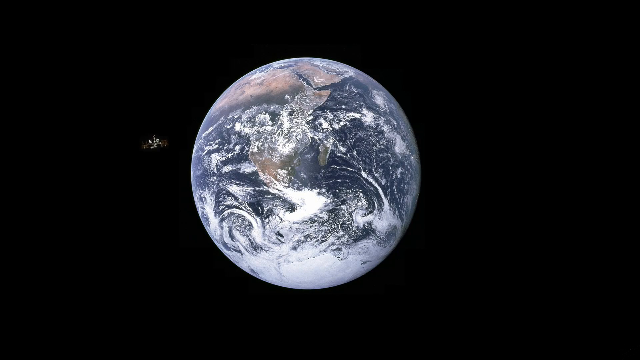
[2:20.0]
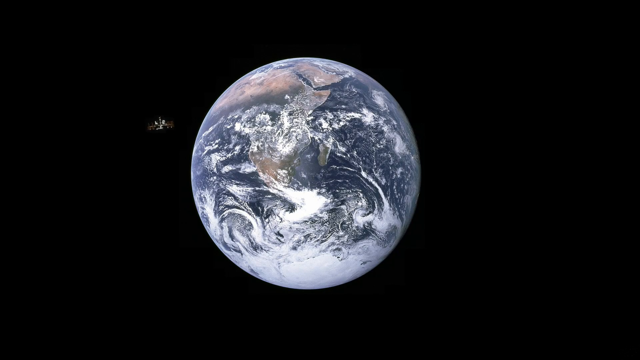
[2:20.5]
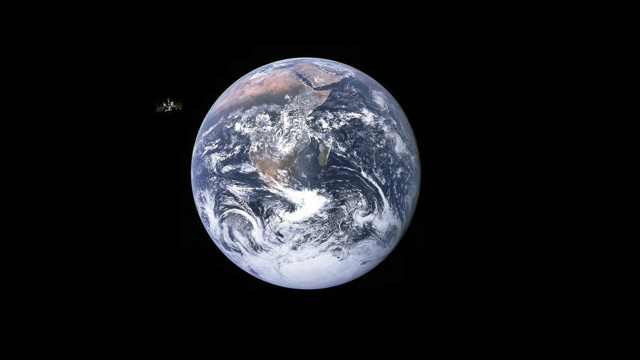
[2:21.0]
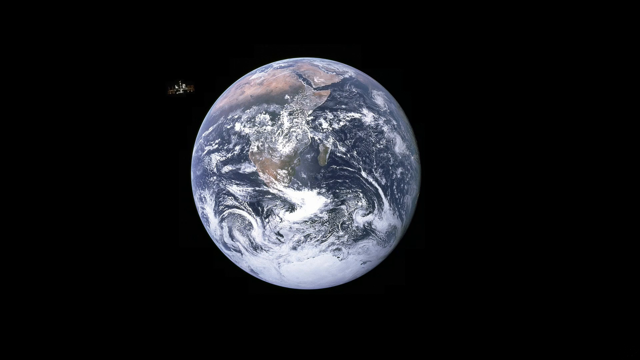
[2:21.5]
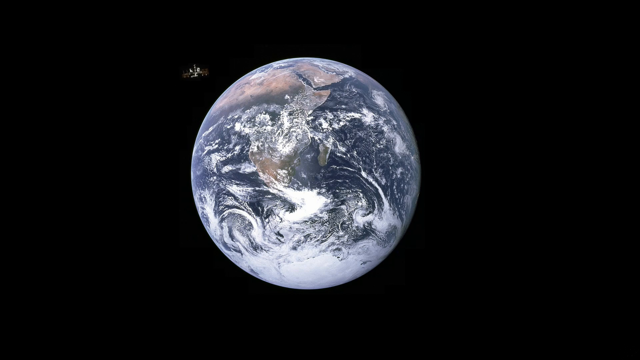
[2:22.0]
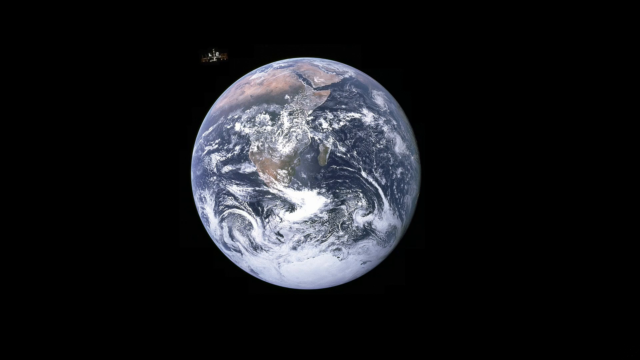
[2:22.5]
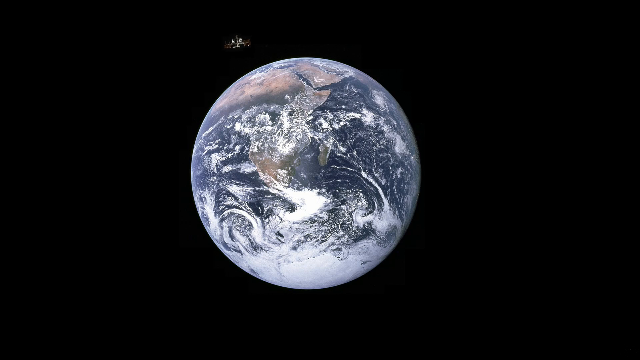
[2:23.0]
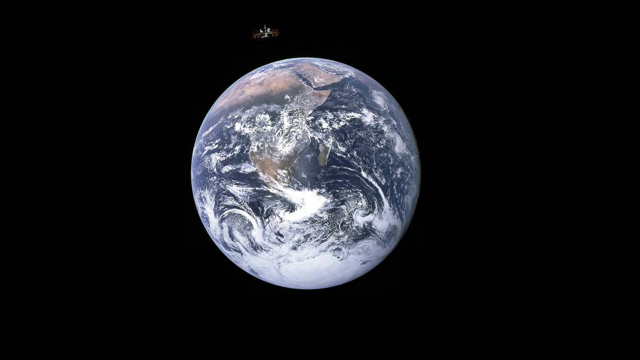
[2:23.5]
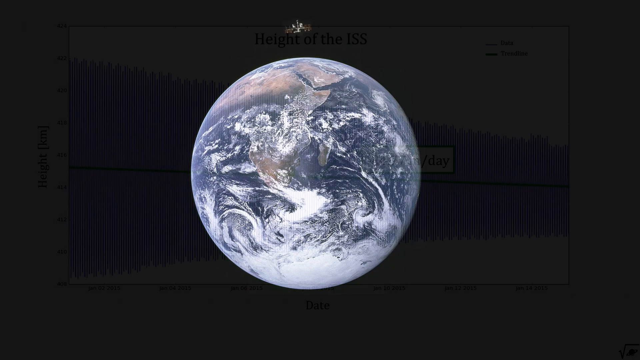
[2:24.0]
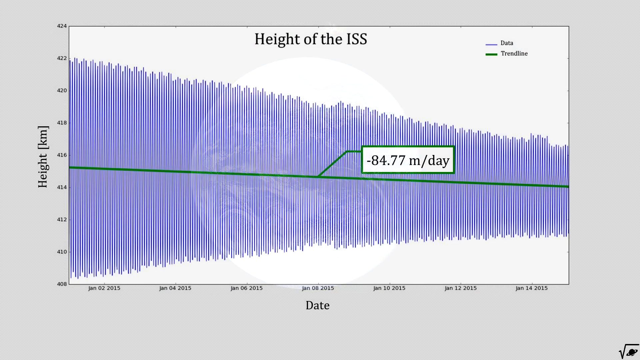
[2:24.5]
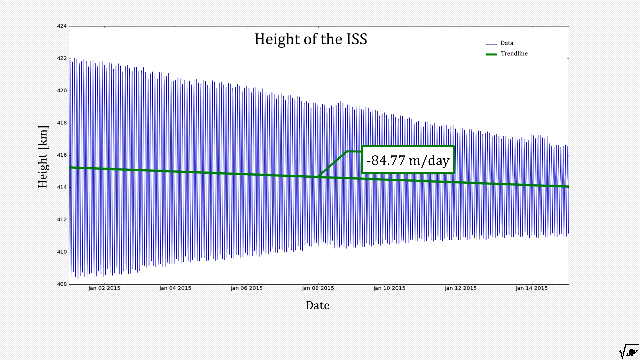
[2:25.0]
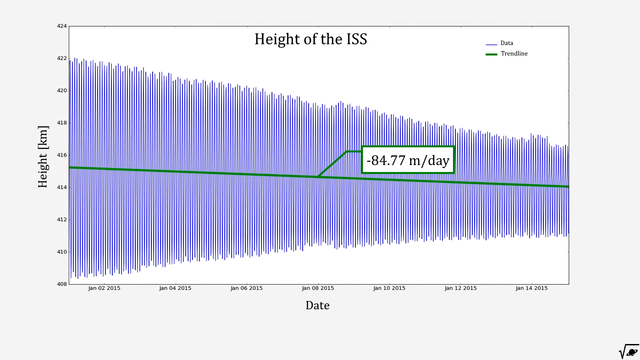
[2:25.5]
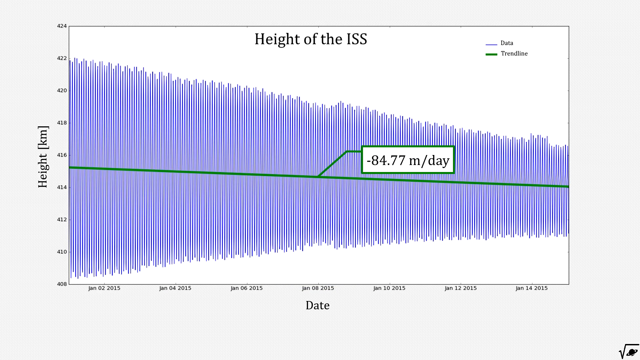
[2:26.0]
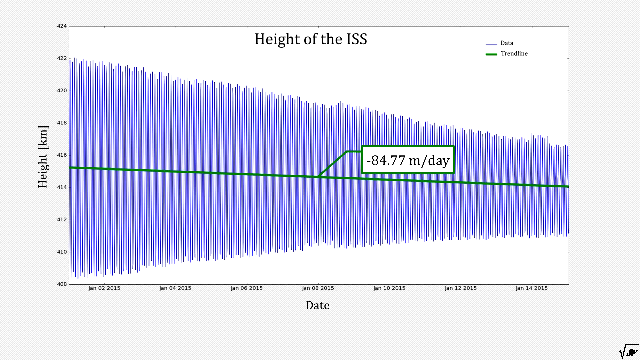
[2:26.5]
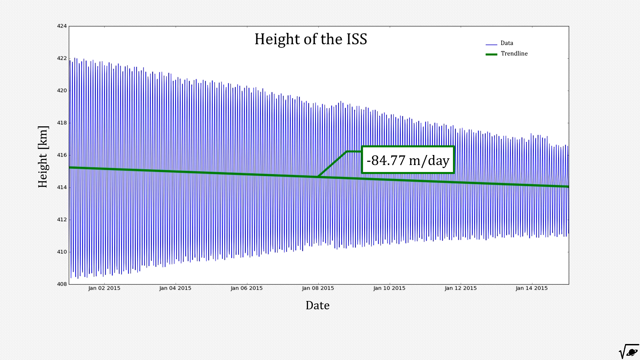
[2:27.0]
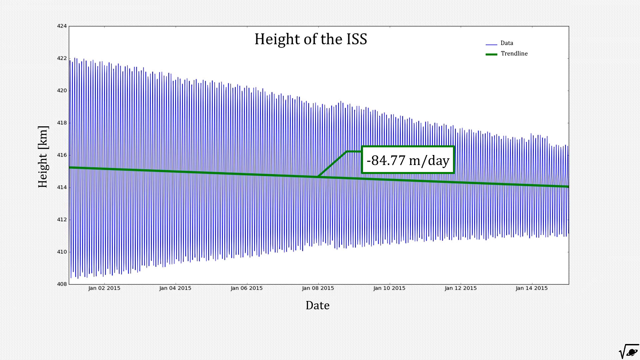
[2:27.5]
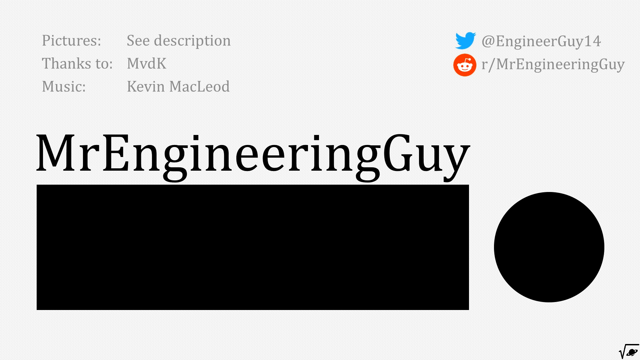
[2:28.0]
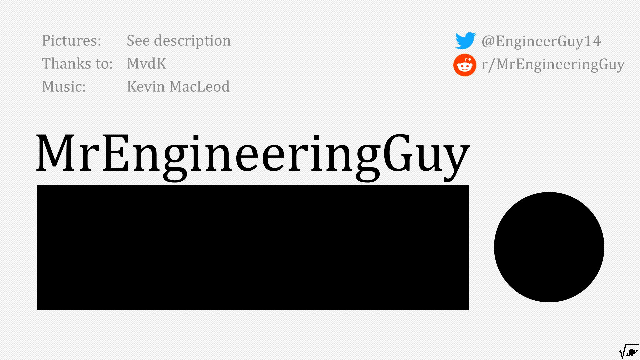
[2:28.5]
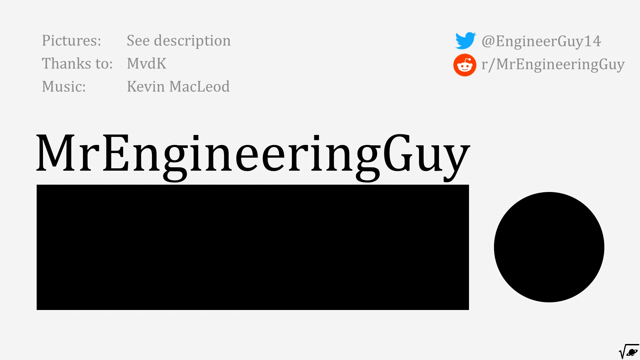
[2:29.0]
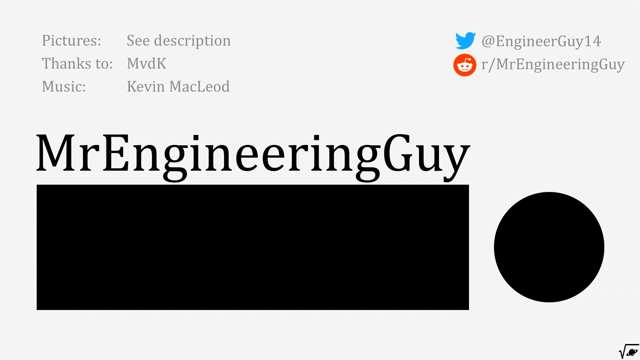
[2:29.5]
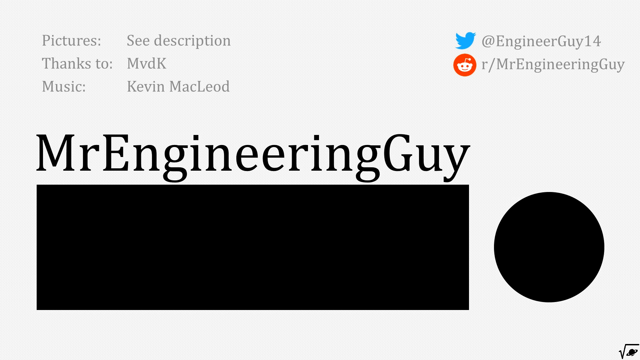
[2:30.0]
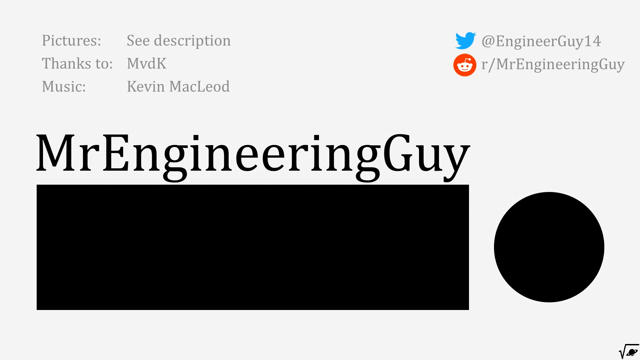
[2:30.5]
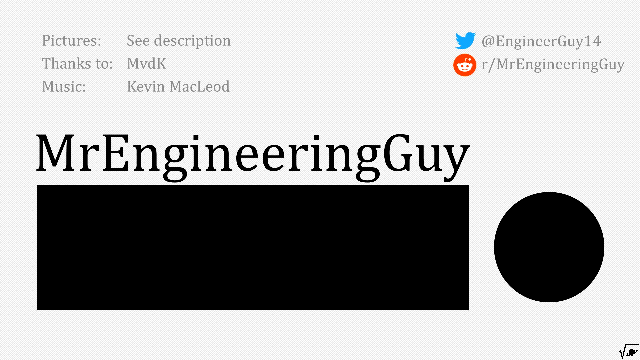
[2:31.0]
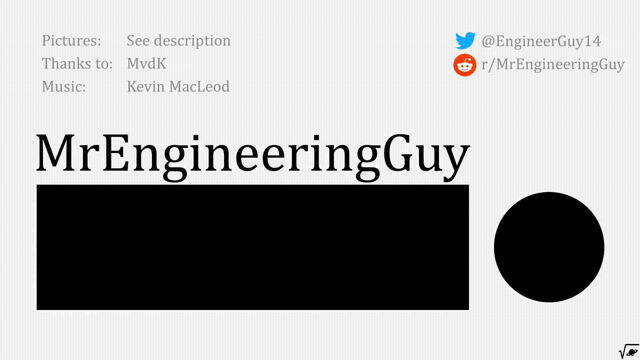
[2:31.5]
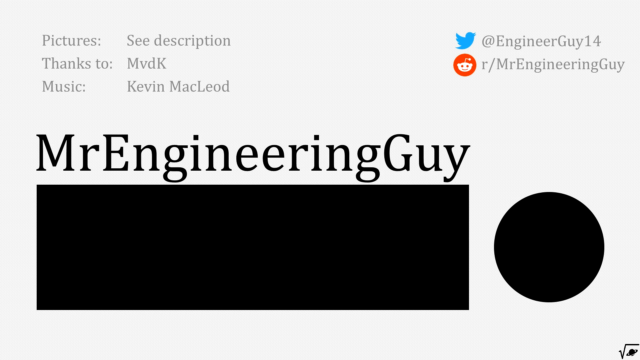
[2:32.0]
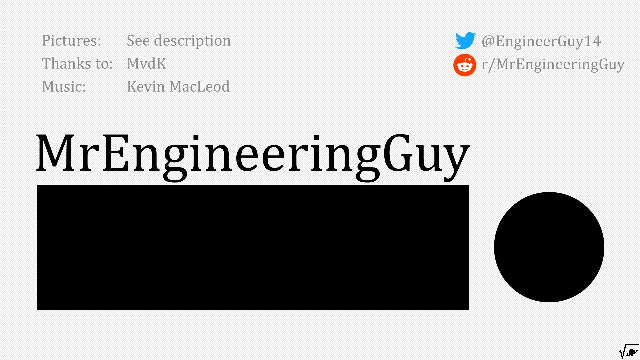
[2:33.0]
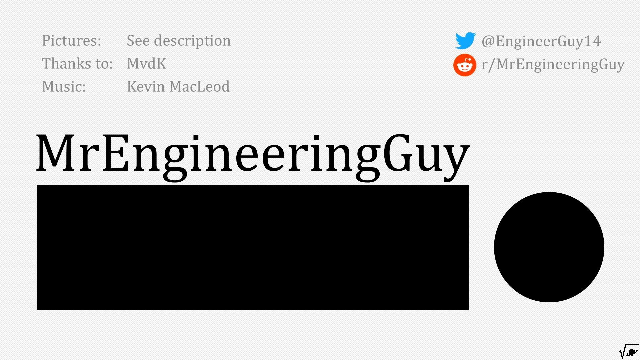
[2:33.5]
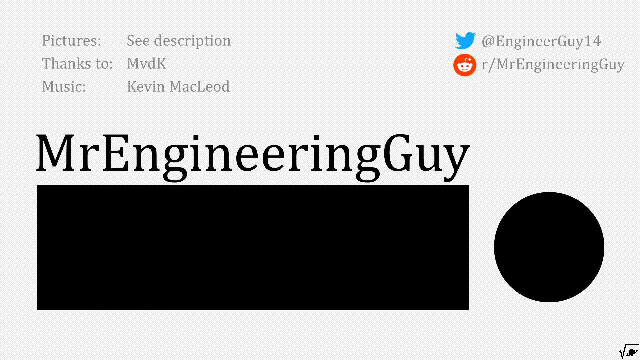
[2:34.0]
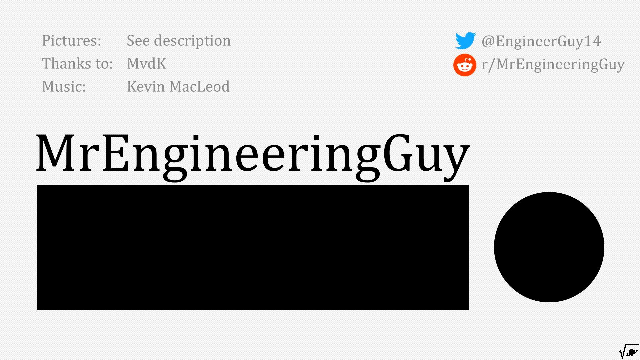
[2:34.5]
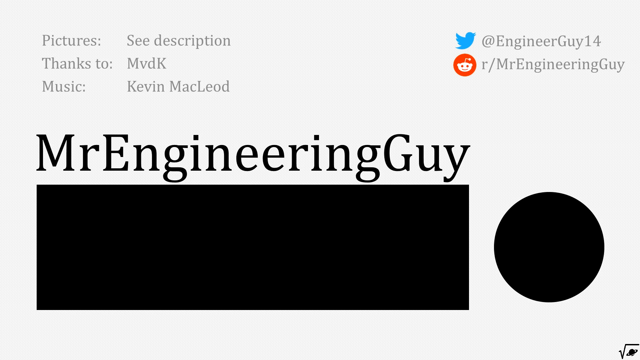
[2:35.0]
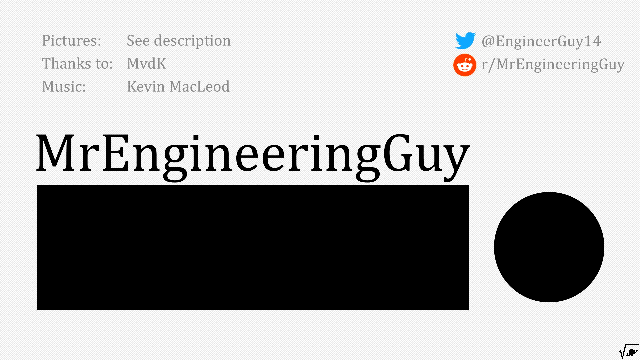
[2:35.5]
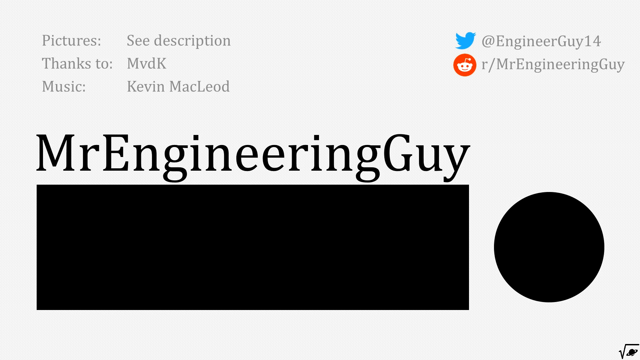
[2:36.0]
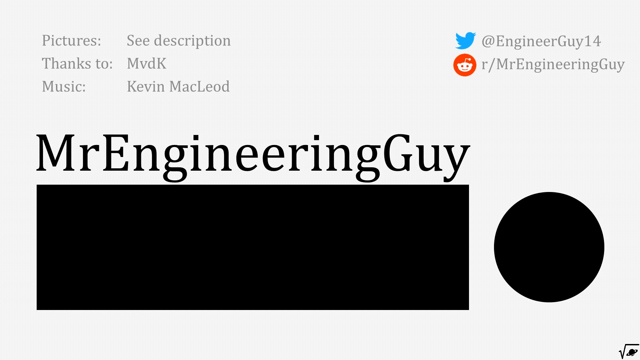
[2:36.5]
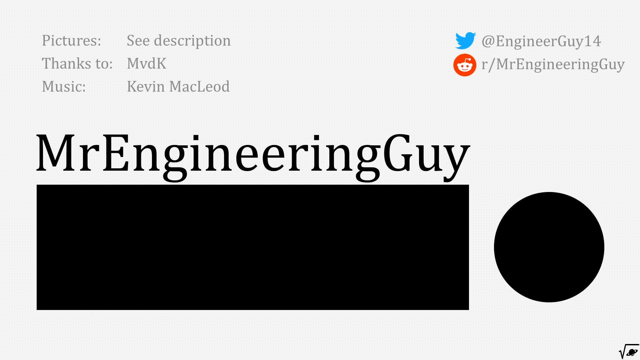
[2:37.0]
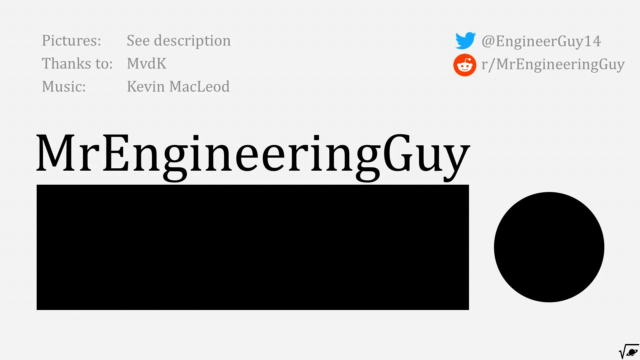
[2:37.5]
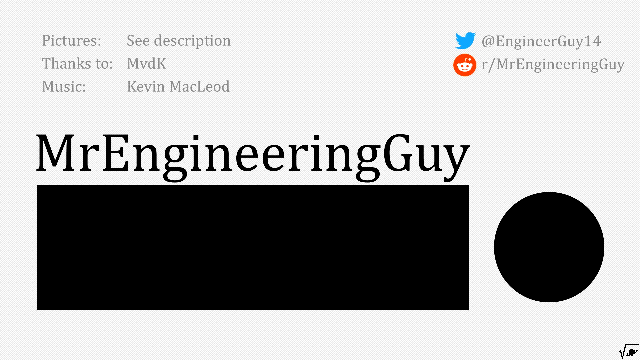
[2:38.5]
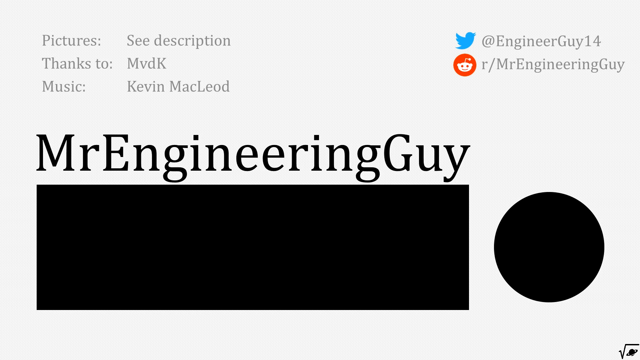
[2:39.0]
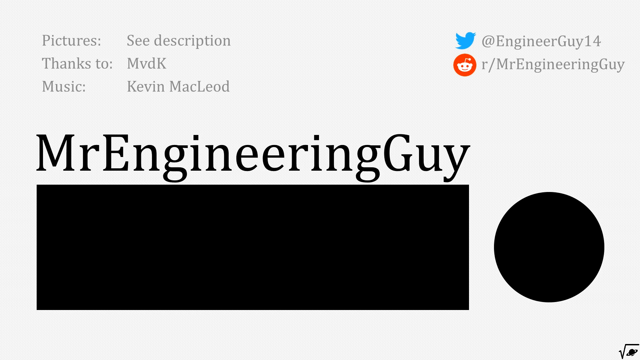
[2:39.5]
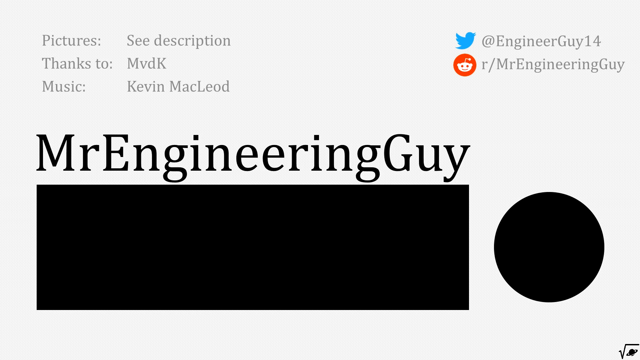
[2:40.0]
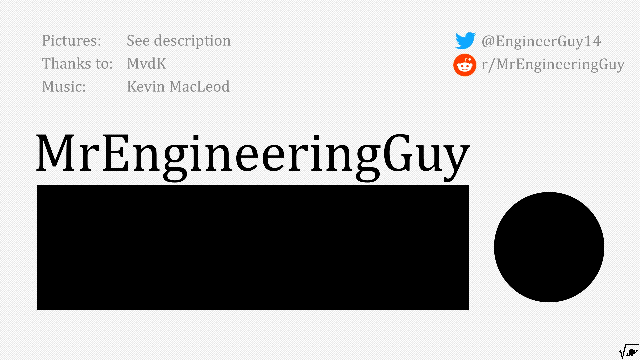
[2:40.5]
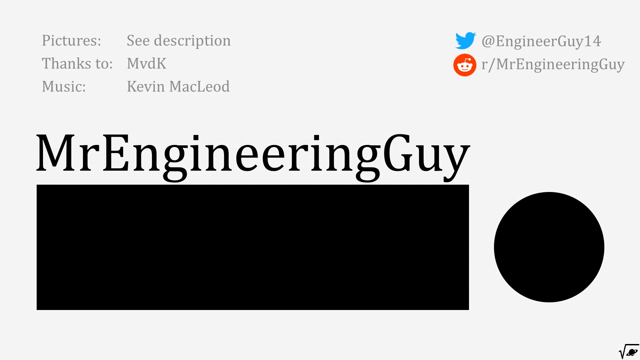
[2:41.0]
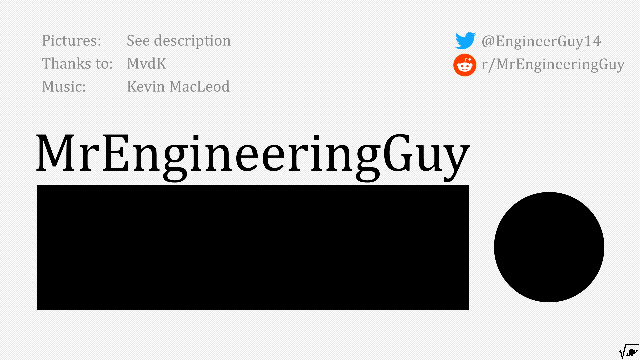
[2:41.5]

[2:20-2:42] The Earth is in the middle of the screen against a black background, apparently meant to be outer space, with no stars visible. A satellite starts on the left-hand side, works its way up and then works its way down. The graph with "height" and "ISS" appears again, with a purple line for the data and a green line going across horizontally as the trend line. The x-axis is labeled "date" and the y-axis "height" in kilometers, on a white background. In gray in the upper left-hand corner are credits including "picture, see description" and "thanks to MVDK Music", and "Mr. Engineering Guy" appears in black.